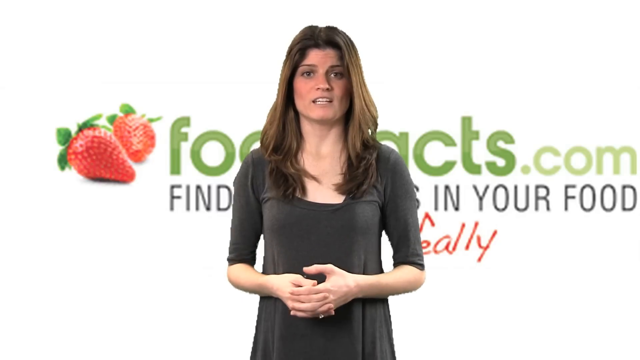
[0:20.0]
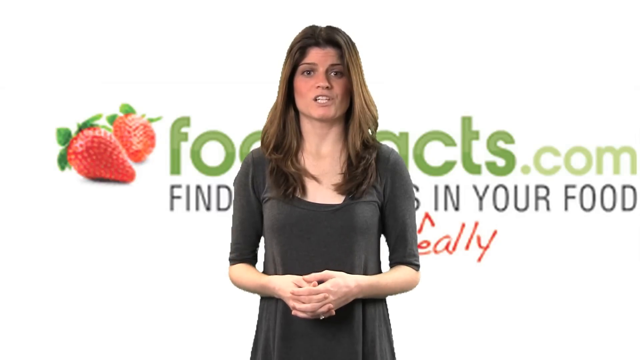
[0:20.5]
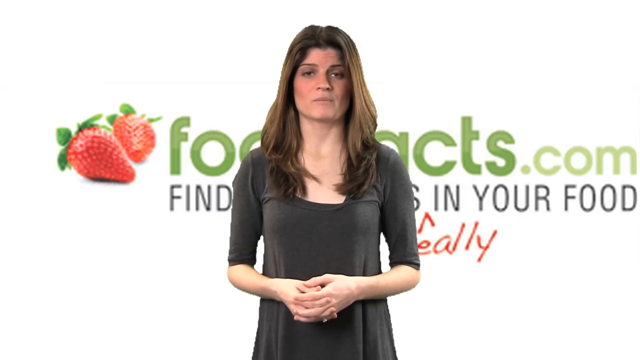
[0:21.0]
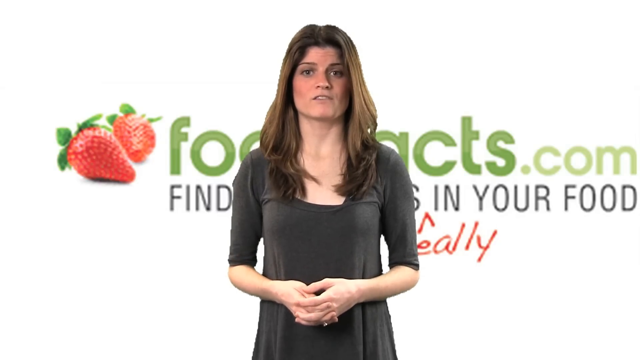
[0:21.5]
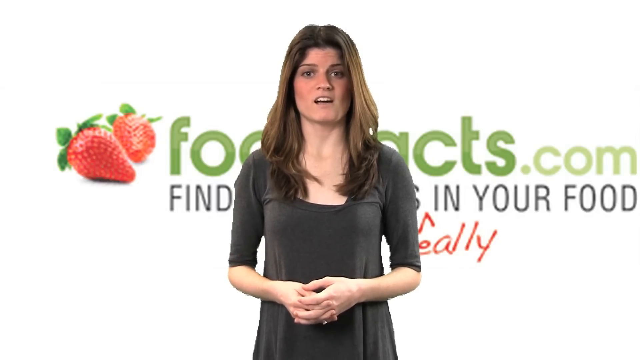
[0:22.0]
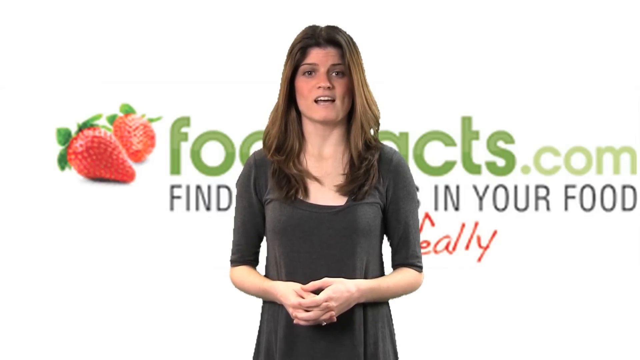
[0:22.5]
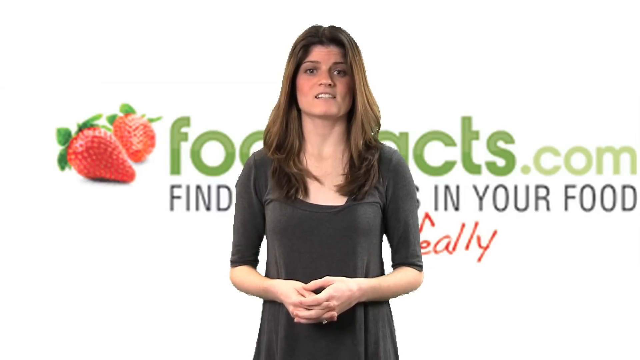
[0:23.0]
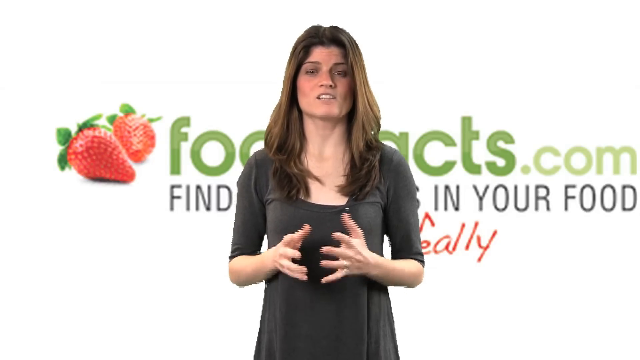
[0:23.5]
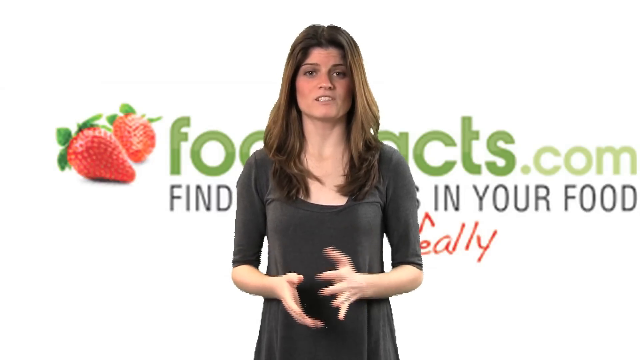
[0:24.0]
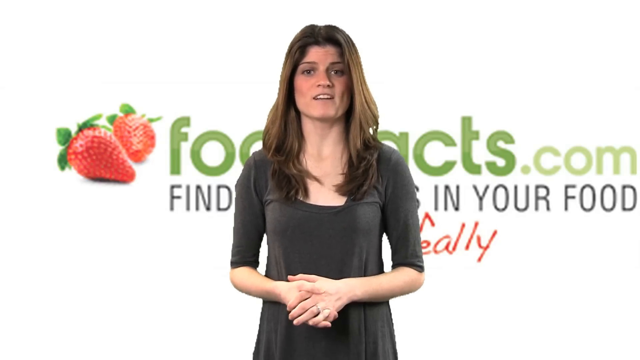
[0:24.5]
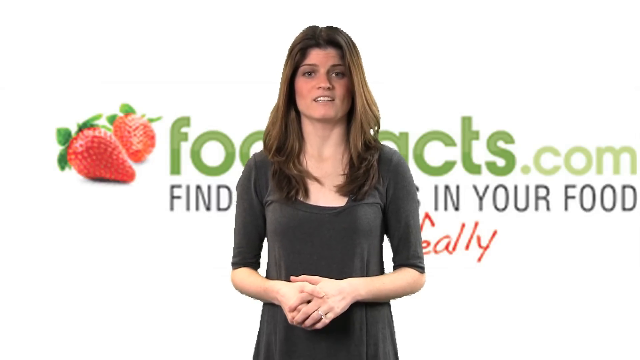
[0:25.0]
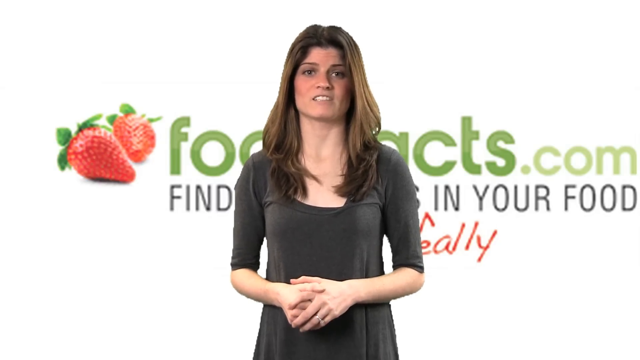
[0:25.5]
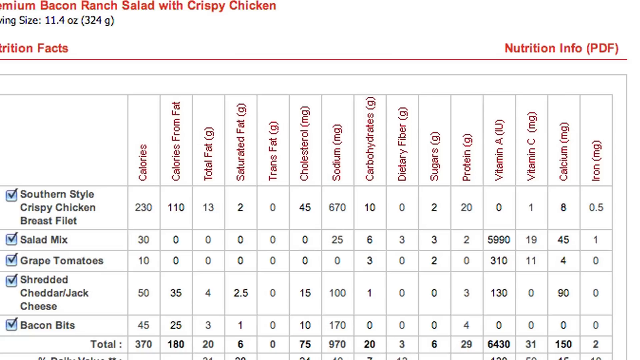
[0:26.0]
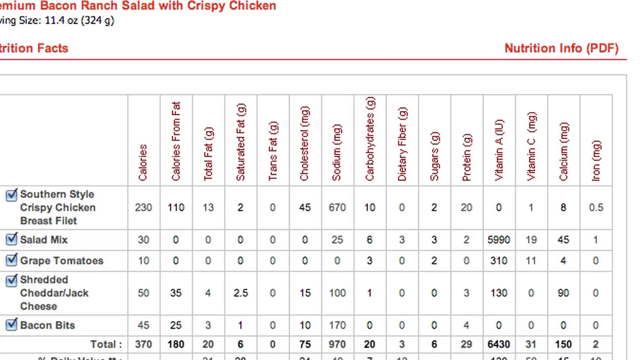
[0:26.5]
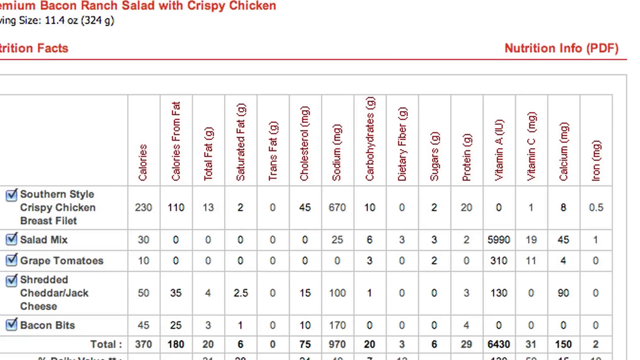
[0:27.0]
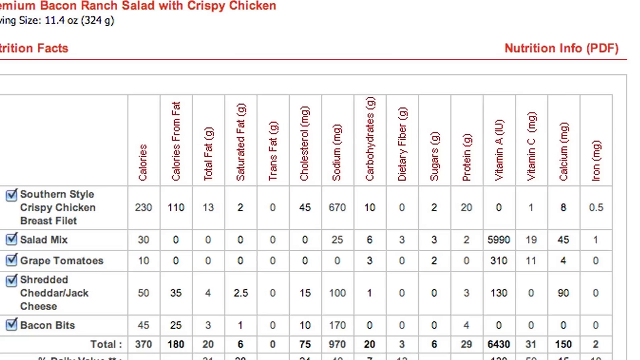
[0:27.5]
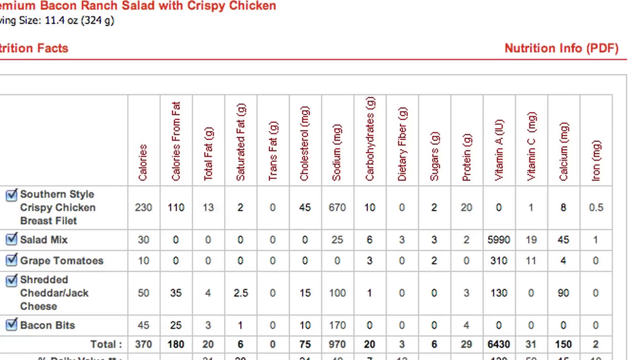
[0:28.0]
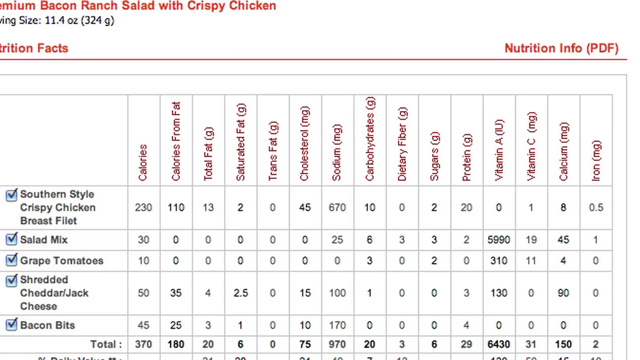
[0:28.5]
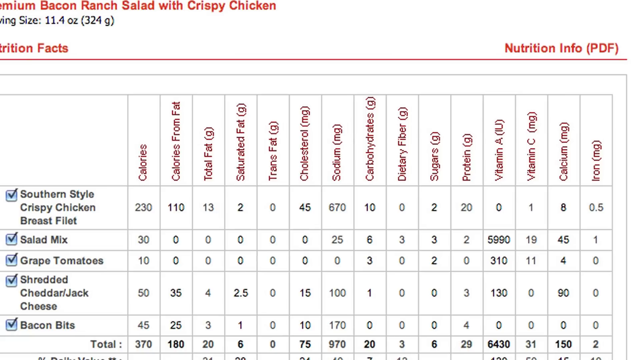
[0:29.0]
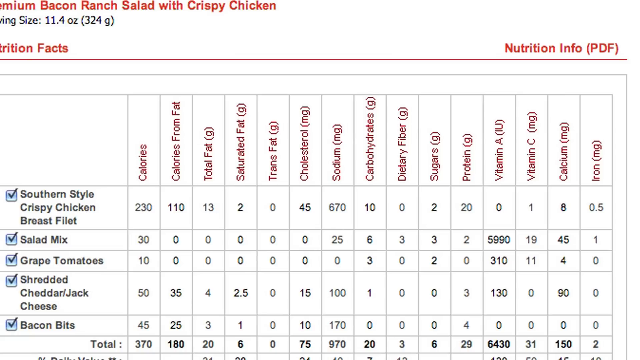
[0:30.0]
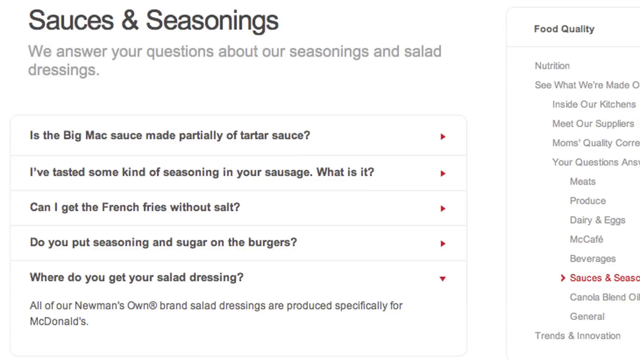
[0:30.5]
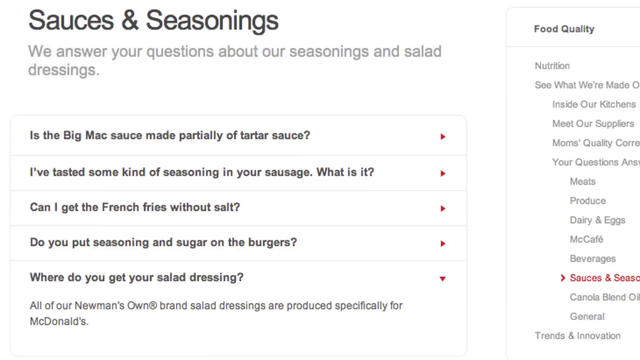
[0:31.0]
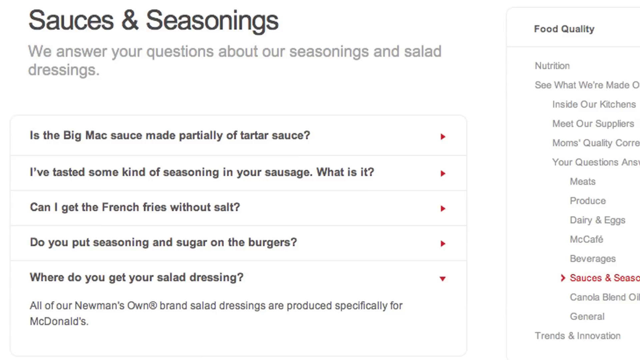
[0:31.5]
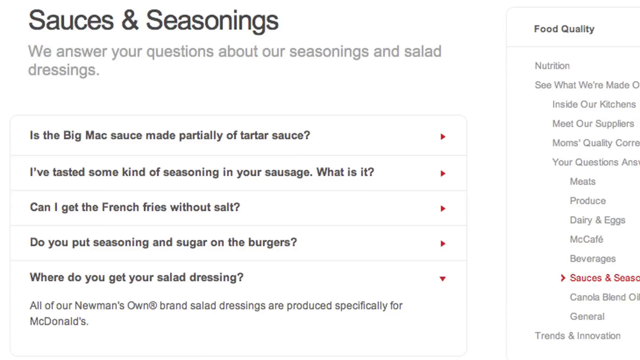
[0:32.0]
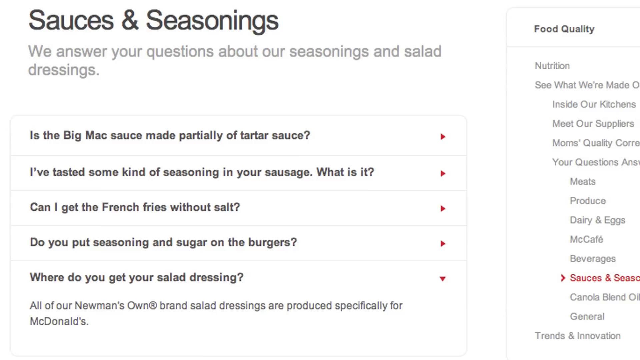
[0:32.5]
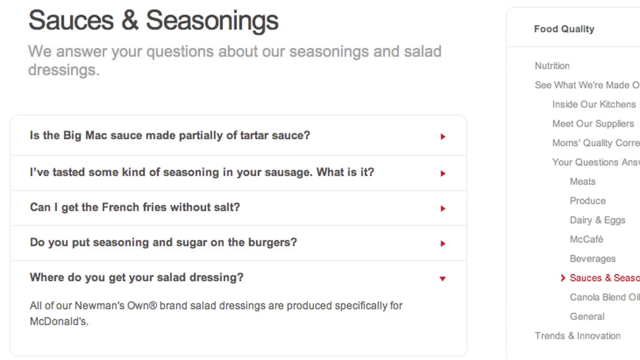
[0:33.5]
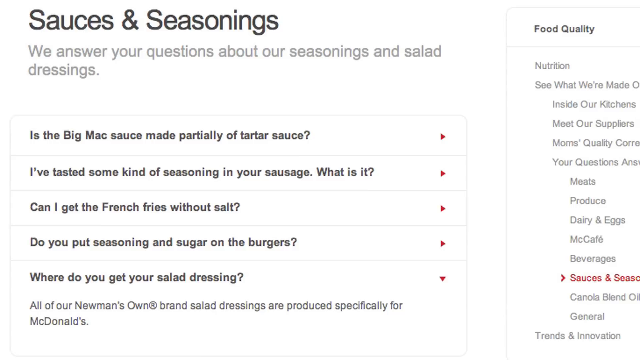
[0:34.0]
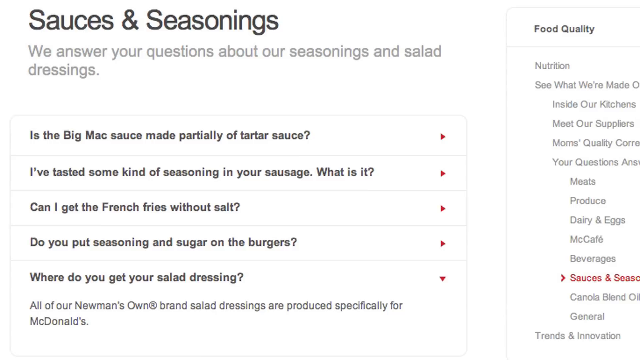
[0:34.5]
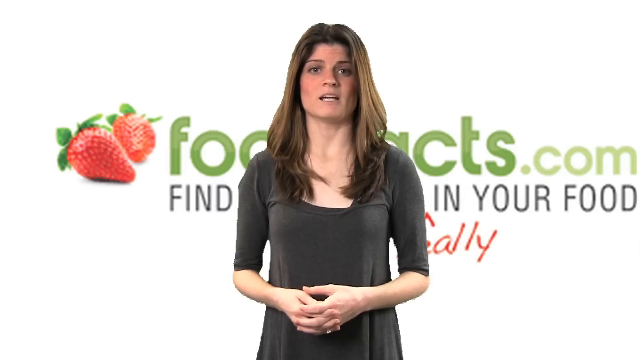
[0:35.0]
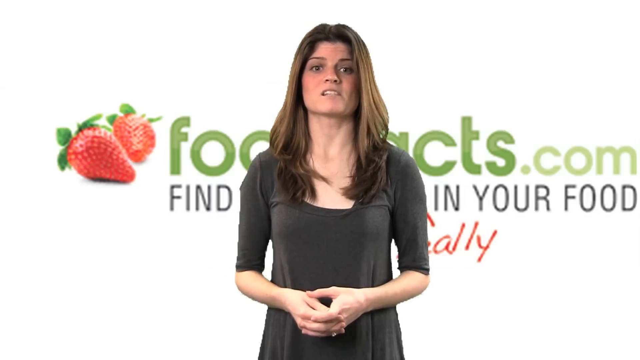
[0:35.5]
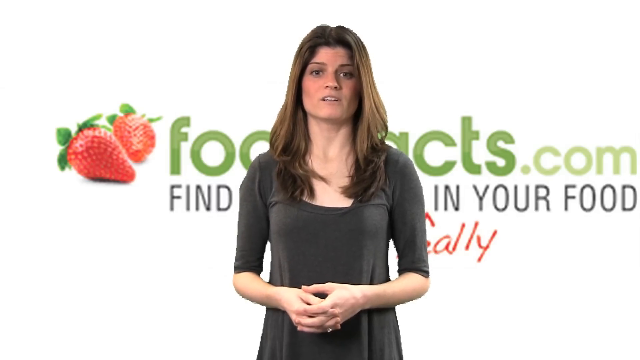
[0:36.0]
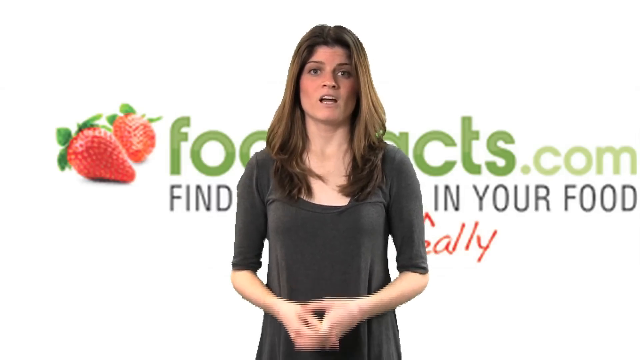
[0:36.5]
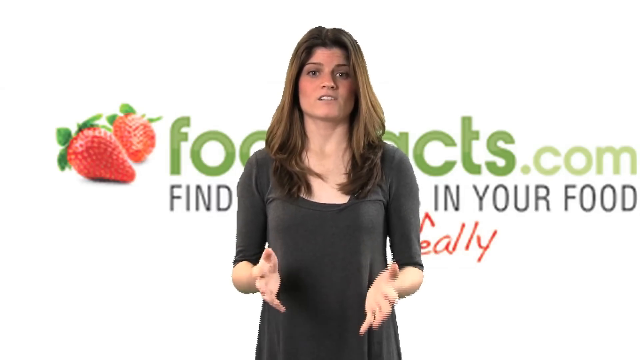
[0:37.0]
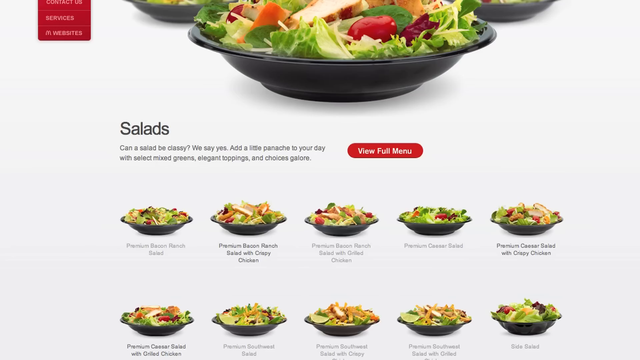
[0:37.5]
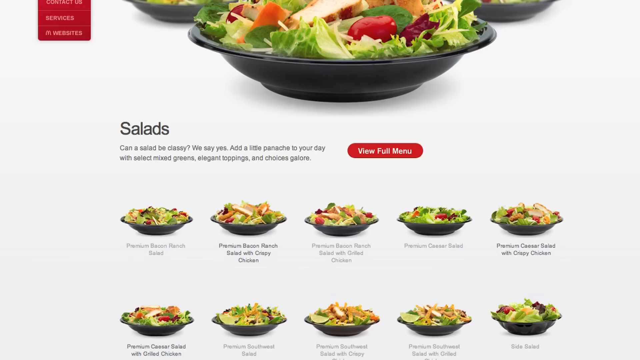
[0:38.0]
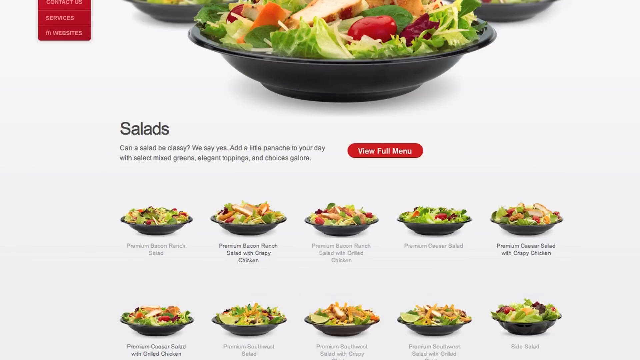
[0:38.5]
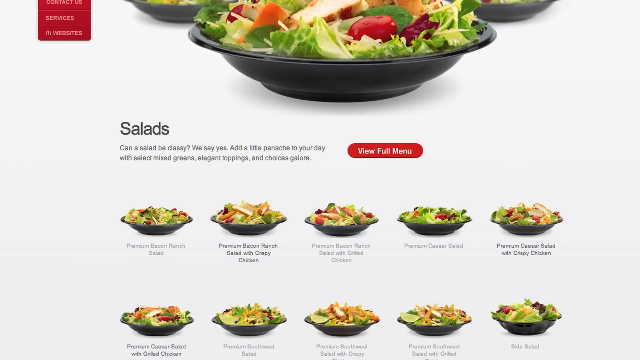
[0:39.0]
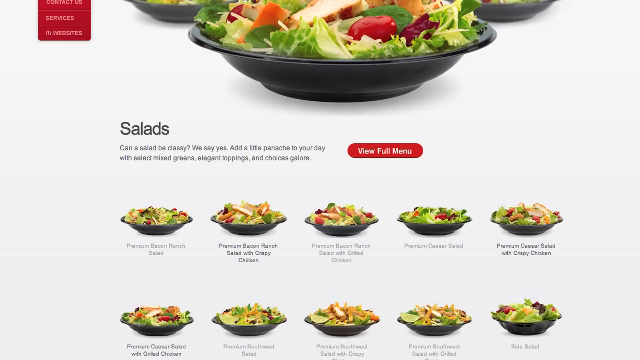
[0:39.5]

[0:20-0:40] The woman continues speaking, crossing her hands in front of her body and gesturing toward the screen by pointing her fingers toward the camera. A chart then appears for the premium bacon ranch salad with crispy chicken. It gives a serving size of 11.4 ounces or 324 grams, lists ingredients such as southern style crispy chicken breast fillet, salad mix, grape tomatoes, shredded cheddar or jack cheese, and bacon bits, and shows a total of 370 calories. The next chart is a screenshot of the sauces and seasonings from the McDonald's website. The woman speaks to the camera again. Then a screenshot shows more than 10 salads, including a variety of Caesar, bacon and Southwest salads.